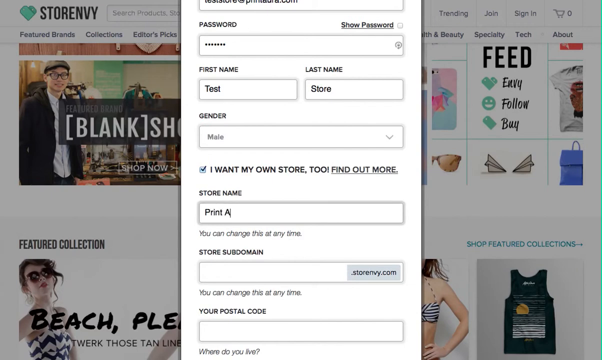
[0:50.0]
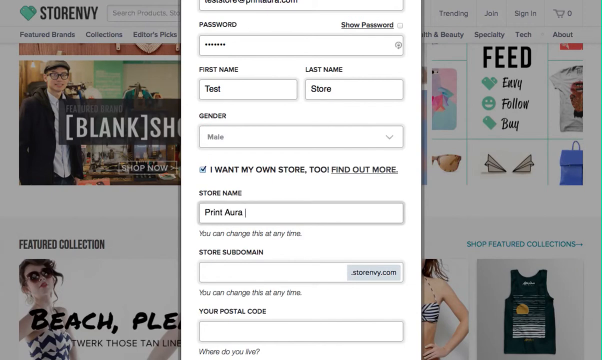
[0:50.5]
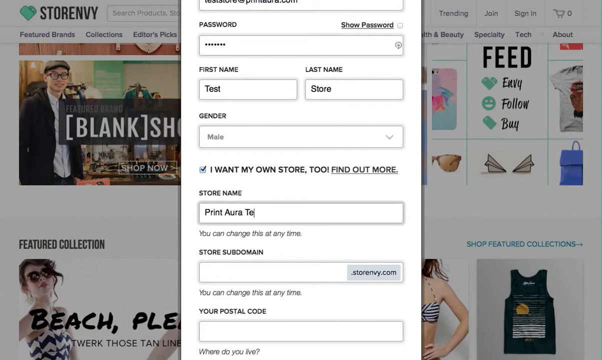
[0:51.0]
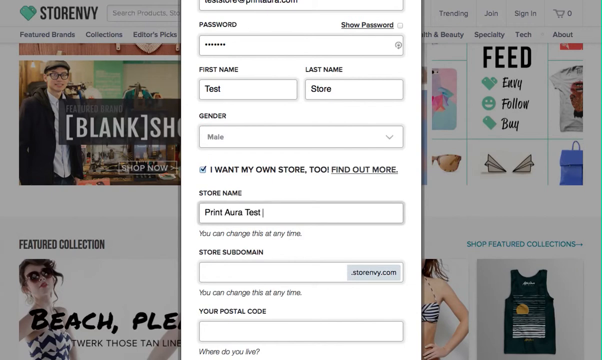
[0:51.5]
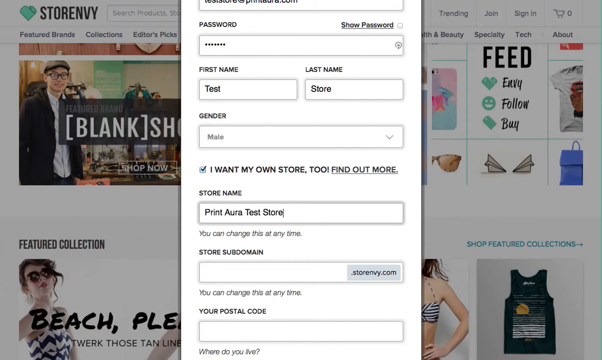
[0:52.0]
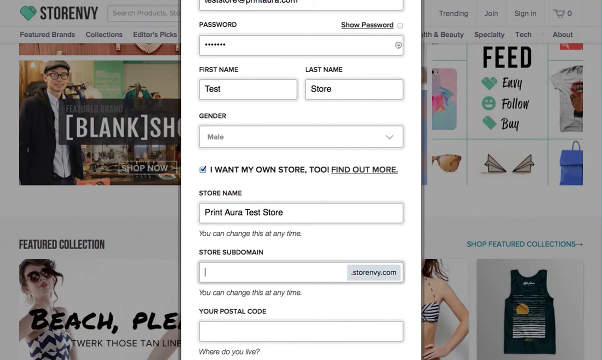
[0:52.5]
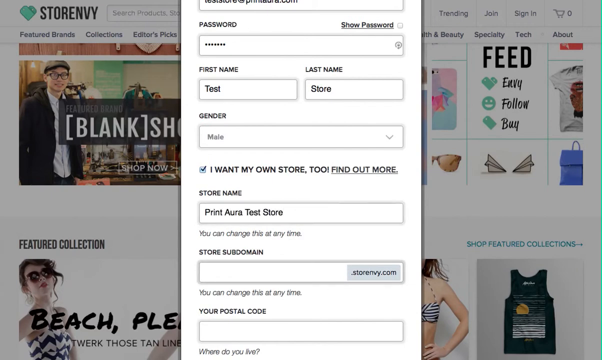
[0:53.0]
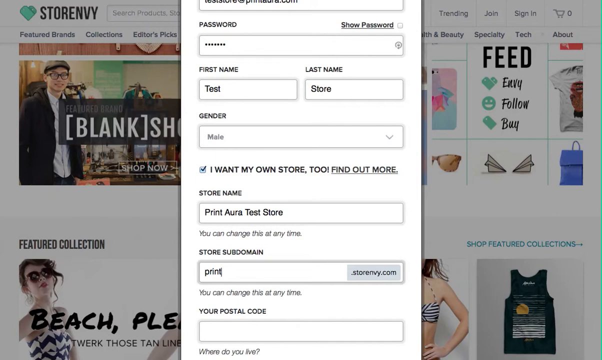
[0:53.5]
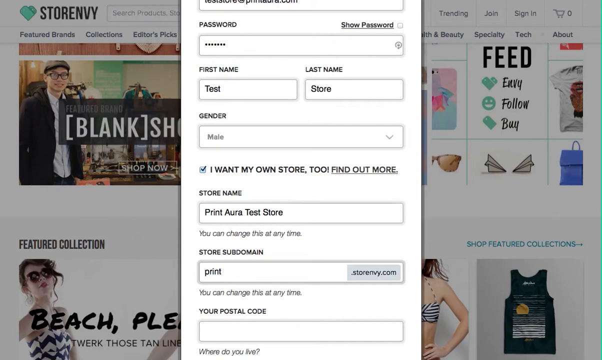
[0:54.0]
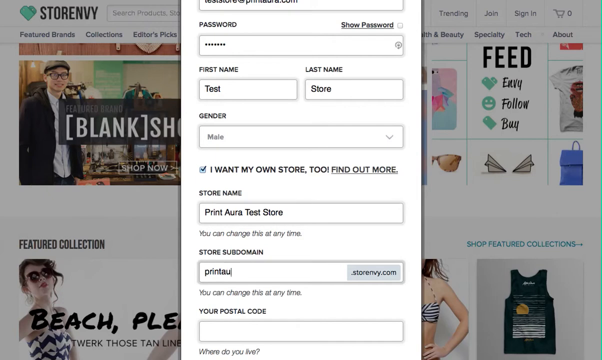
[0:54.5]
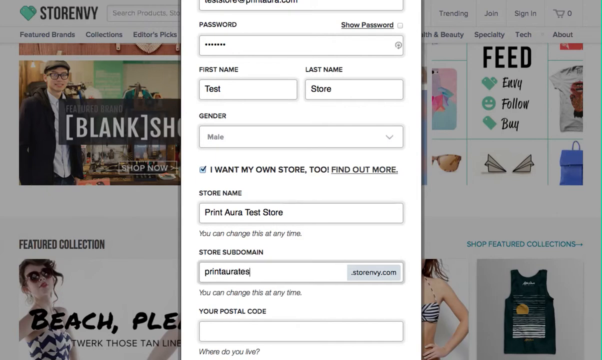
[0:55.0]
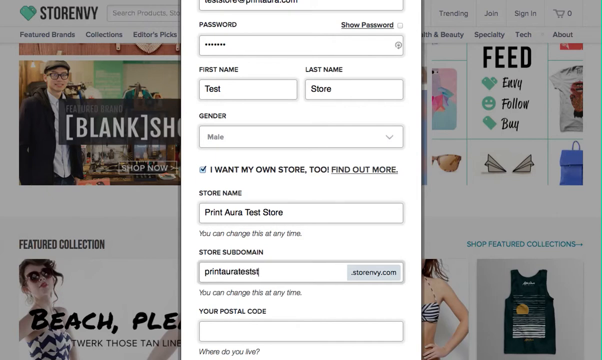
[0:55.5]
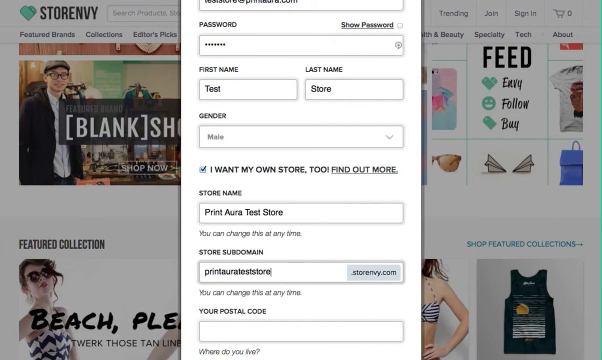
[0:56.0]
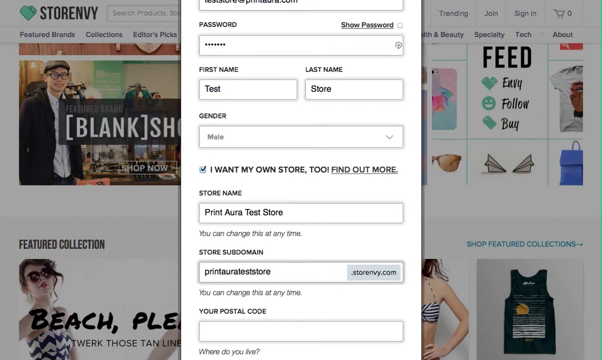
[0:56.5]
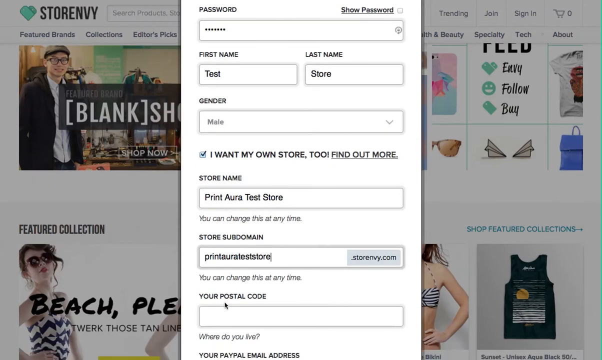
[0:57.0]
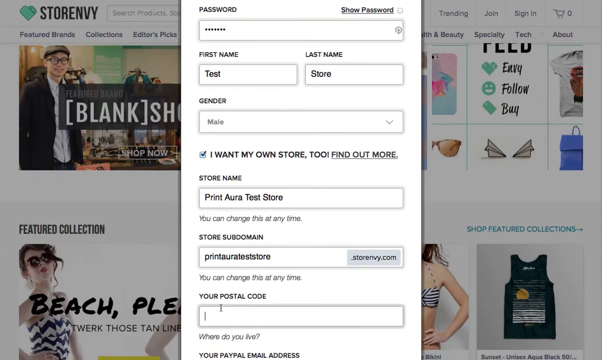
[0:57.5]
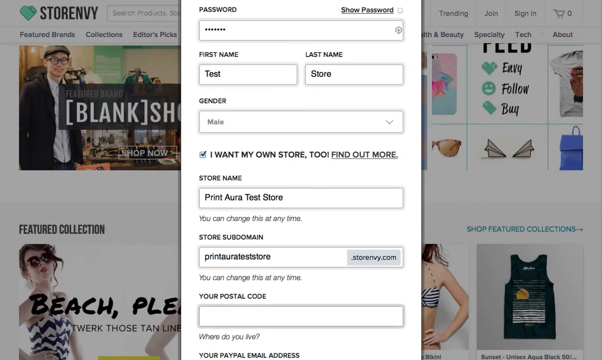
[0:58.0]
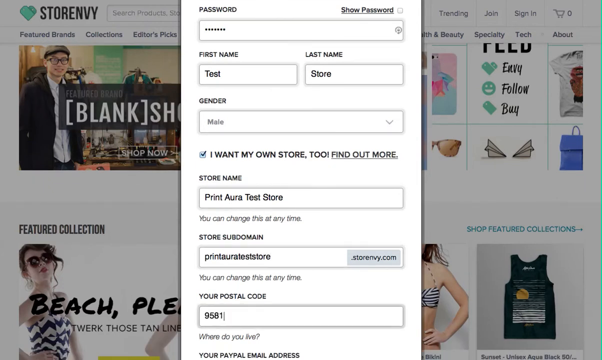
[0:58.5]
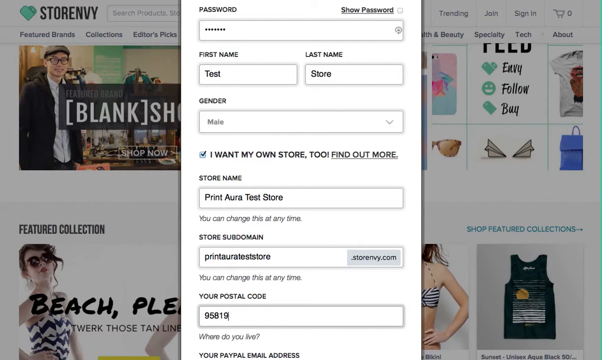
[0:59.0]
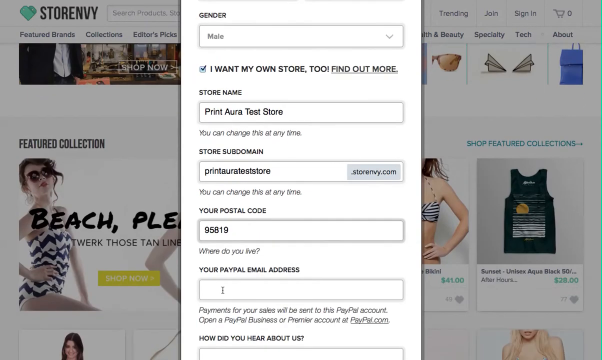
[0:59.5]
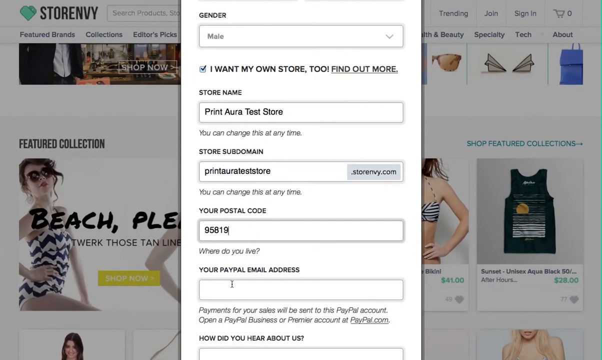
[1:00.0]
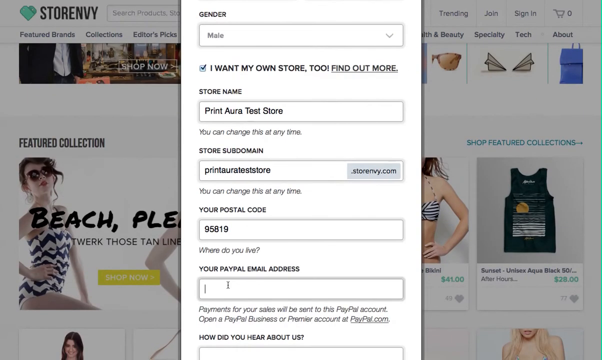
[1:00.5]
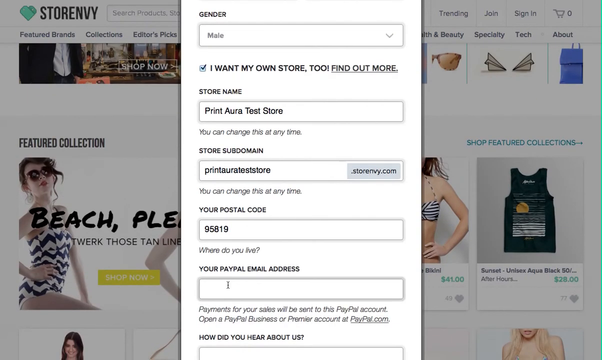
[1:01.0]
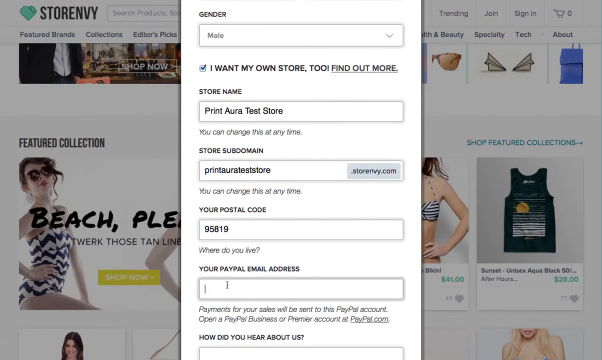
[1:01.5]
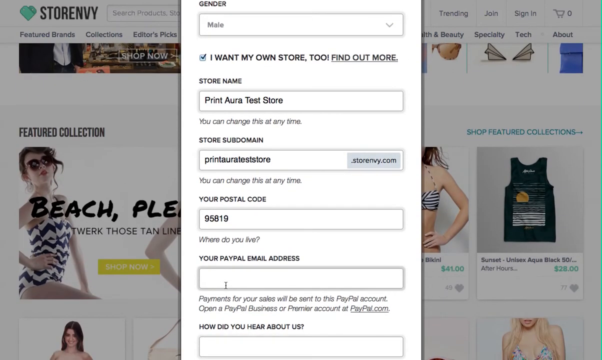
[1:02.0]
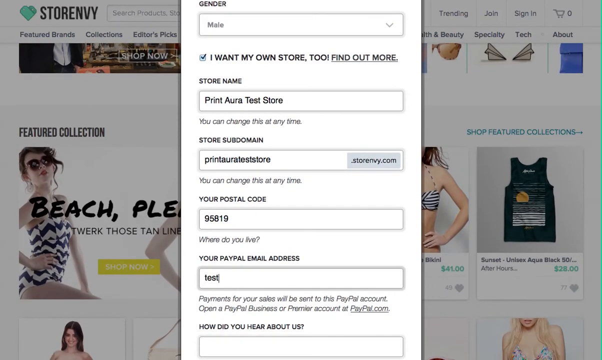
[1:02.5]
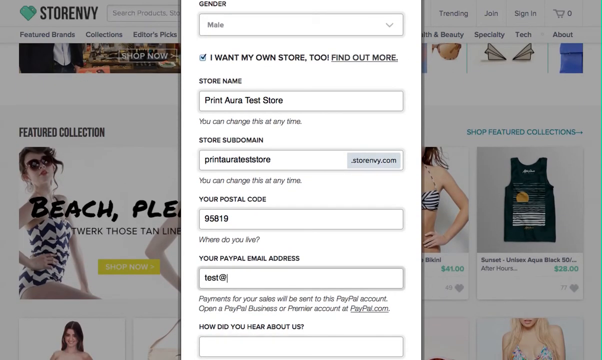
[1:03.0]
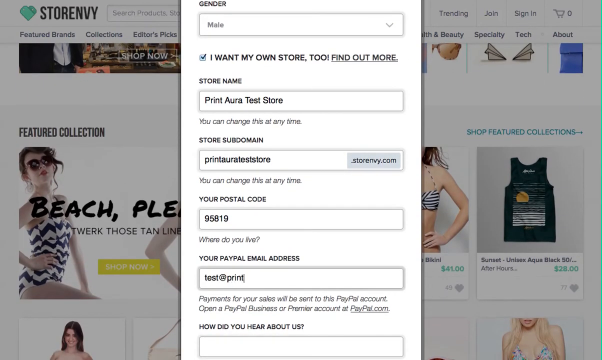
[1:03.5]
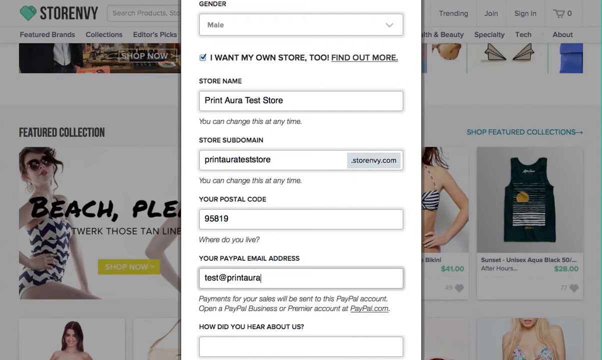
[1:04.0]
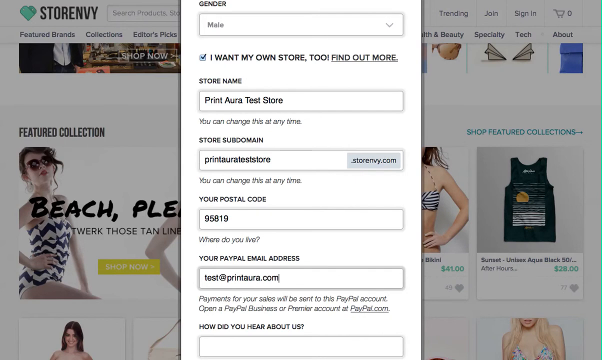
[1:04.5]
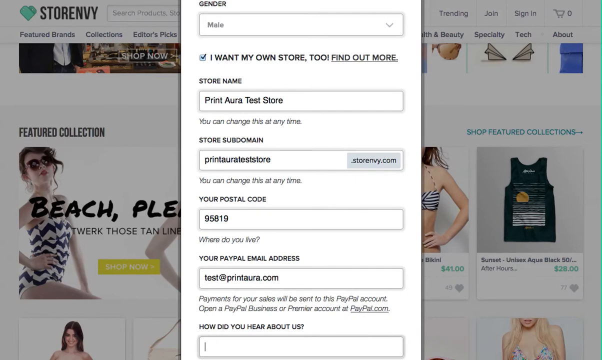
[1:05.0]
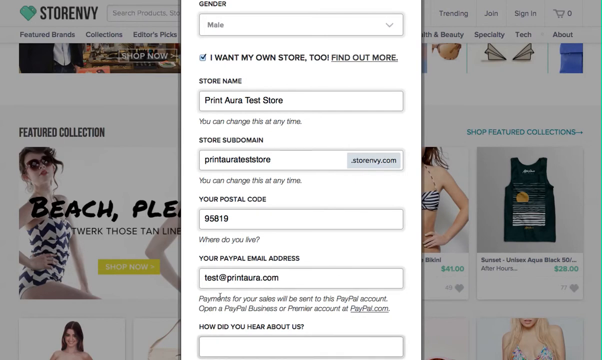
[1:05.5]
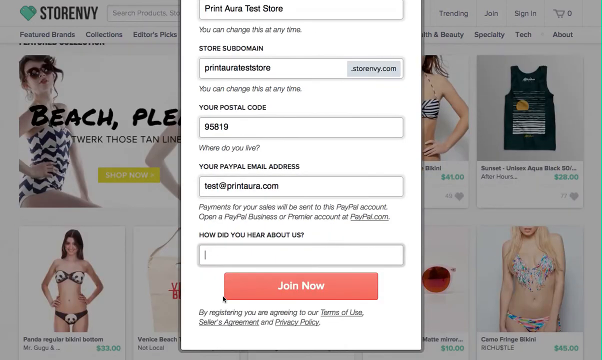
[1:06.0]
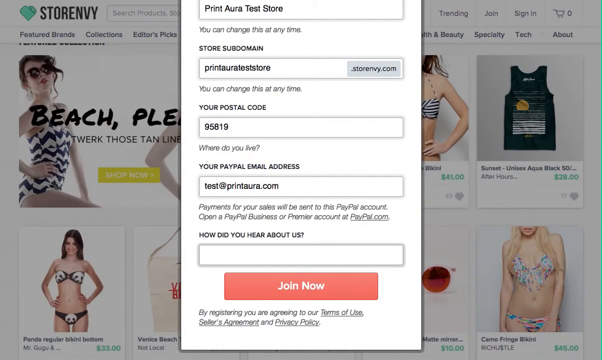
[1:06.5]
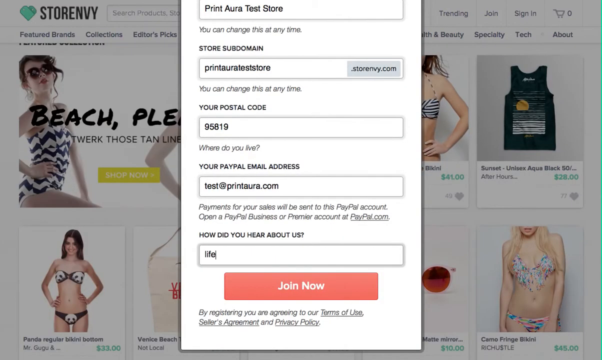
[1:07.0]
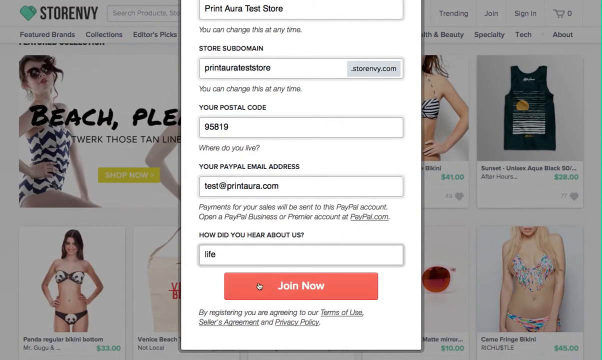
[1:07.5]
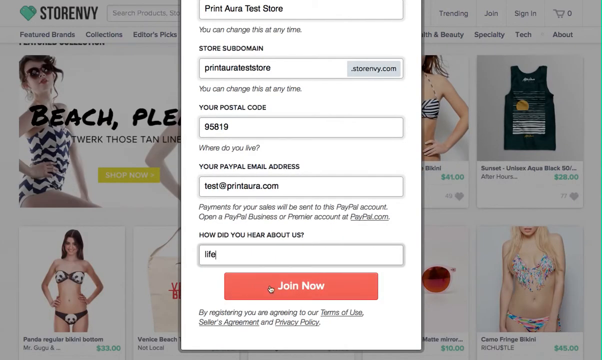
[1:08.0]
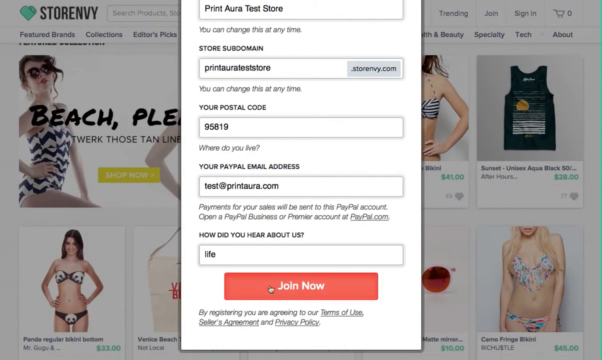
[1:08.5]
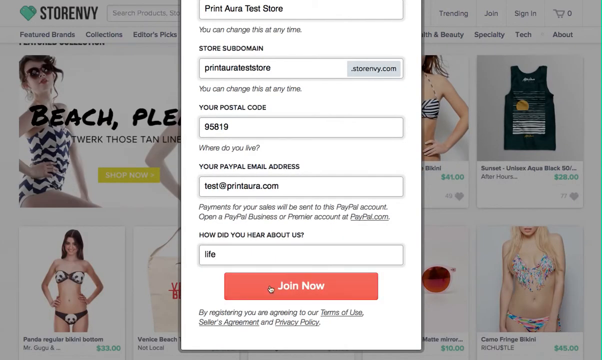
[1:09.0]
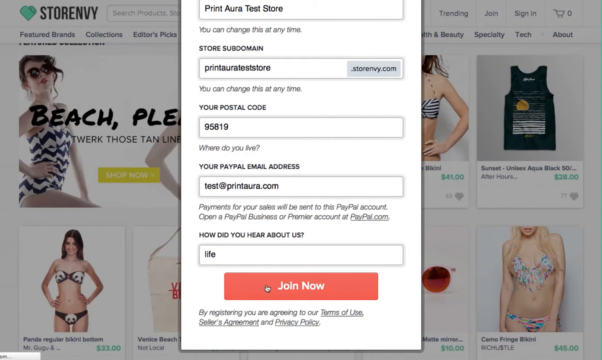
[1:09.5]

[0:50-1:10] The user enters more details on the modal form. The store name field reads "PrintAura test store," with "you can change this at any time" in italics beneath it. Next comes a store subdomain field, also filled with "PrintAura test store," with ".storenv.com" to its right and "you can change this at any time" beneath it. Below that, a postal code field contains "95819," with "where do you live" under it. Then comes a field labeled "your paypal email address," filled with a test email address, and under it the text "payments for your sales will be sent to this paypal account. Open a paypal business or premier account at paypal.com." Beneath that is a box reading "how did you hear about us," which is at first empty; the user types into it. They then click the join button, which is red with white text.